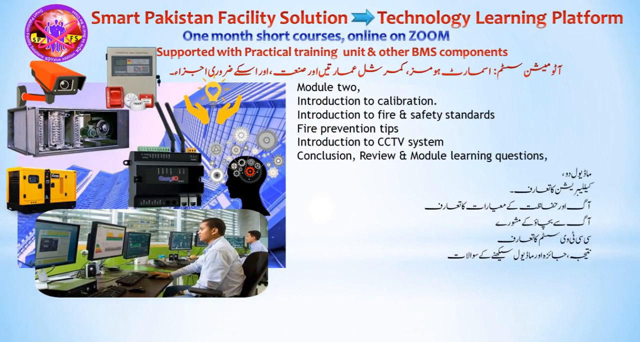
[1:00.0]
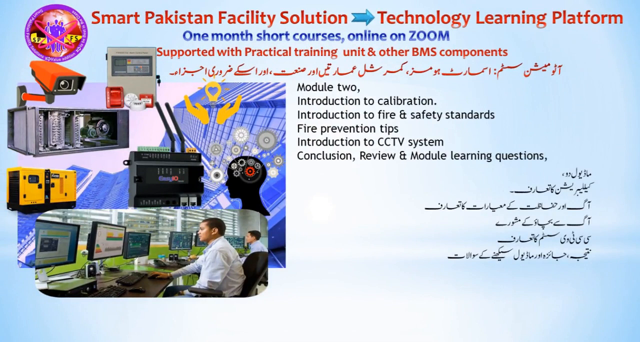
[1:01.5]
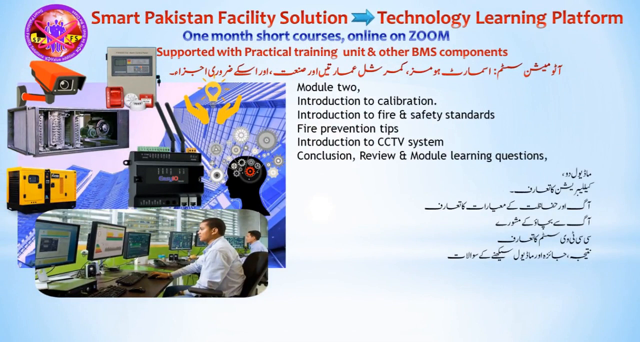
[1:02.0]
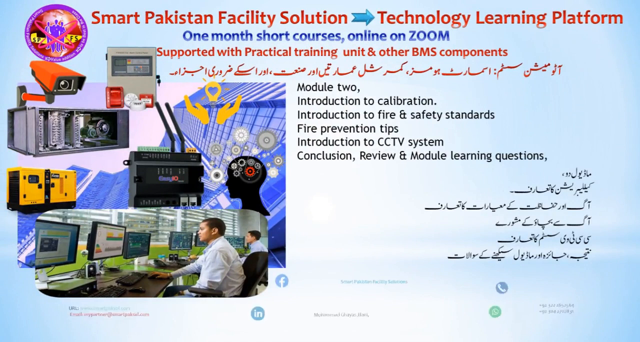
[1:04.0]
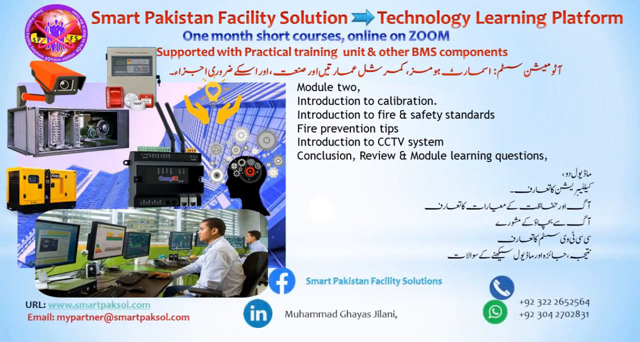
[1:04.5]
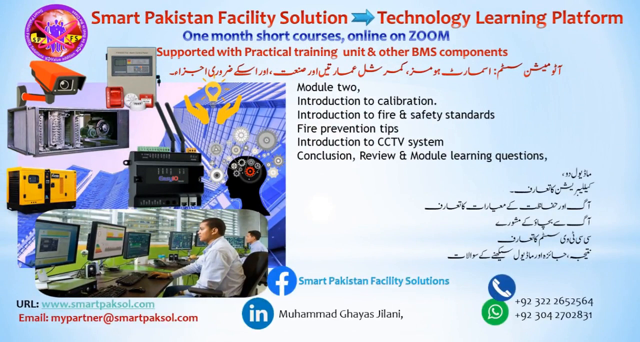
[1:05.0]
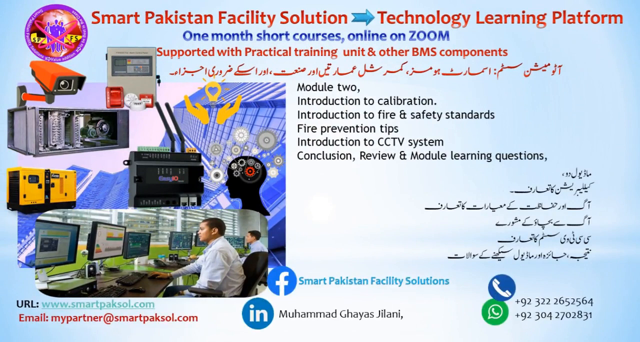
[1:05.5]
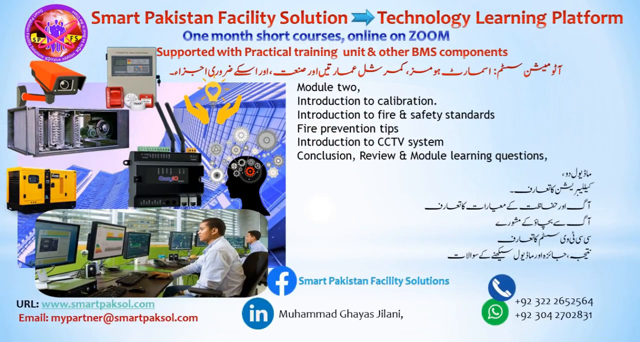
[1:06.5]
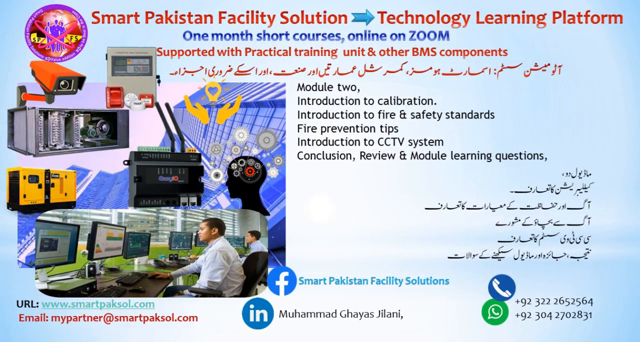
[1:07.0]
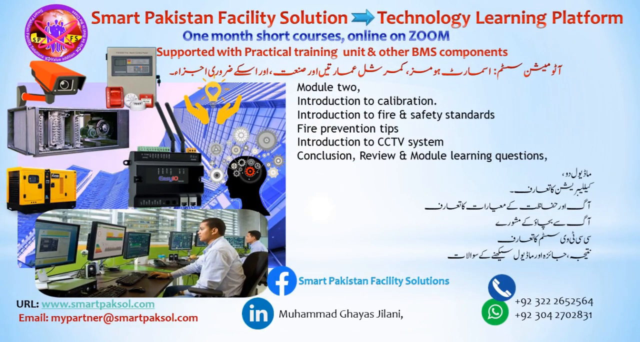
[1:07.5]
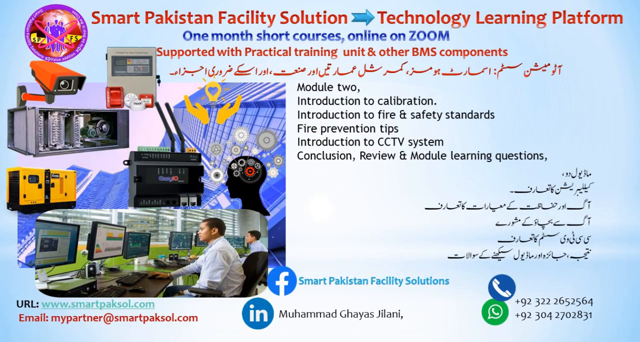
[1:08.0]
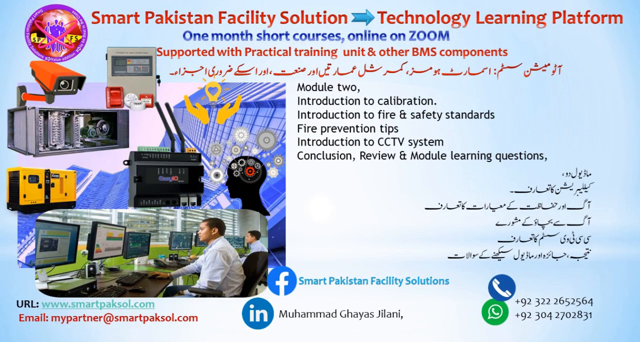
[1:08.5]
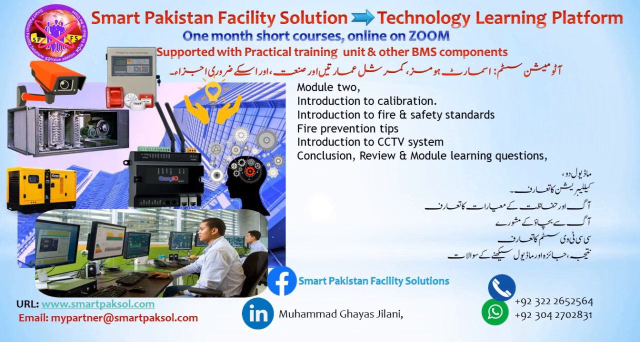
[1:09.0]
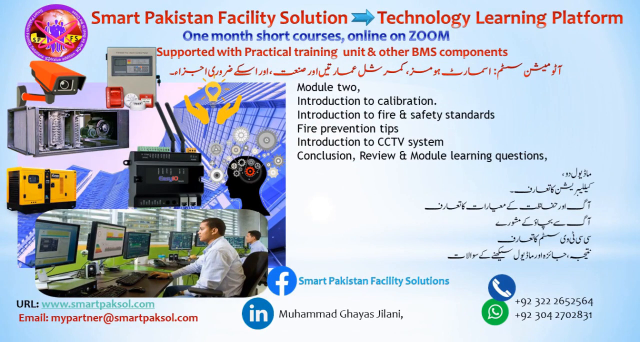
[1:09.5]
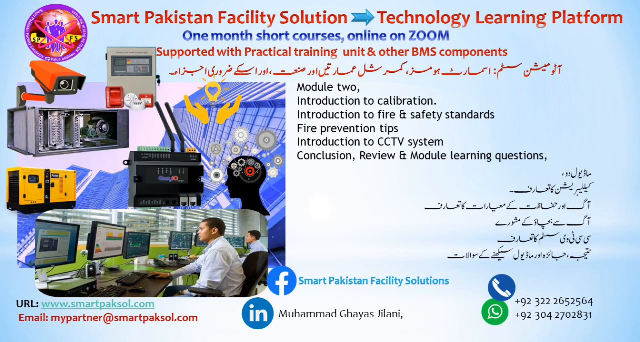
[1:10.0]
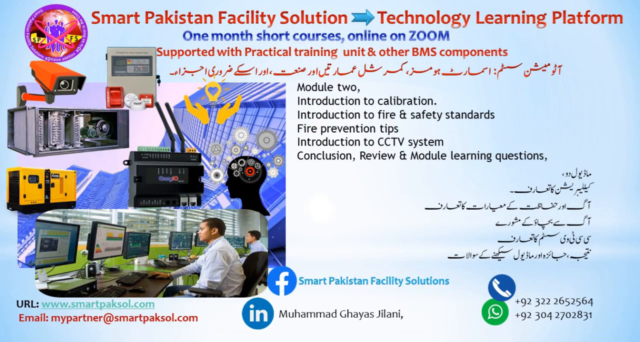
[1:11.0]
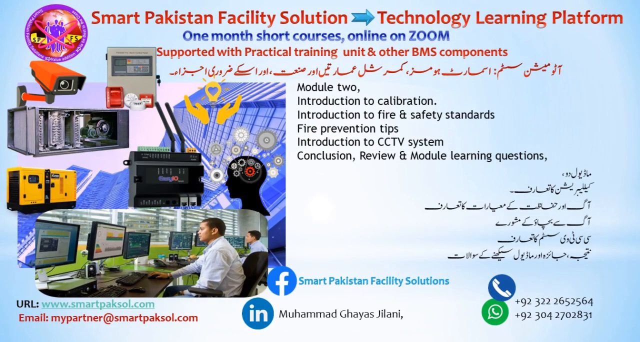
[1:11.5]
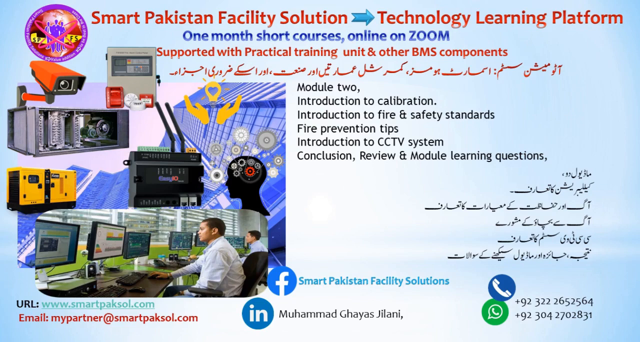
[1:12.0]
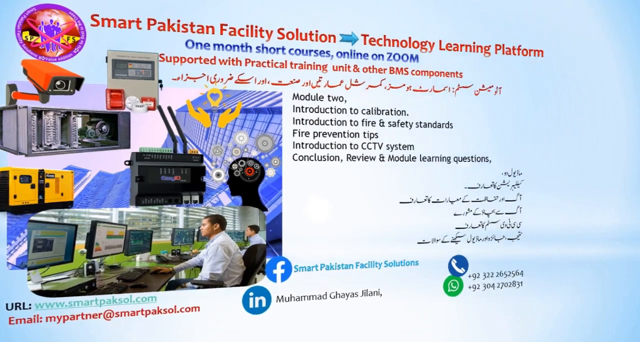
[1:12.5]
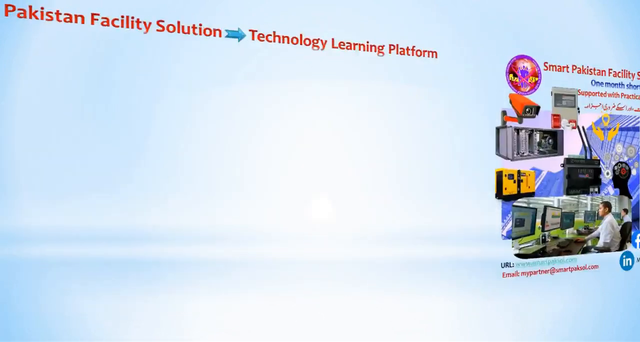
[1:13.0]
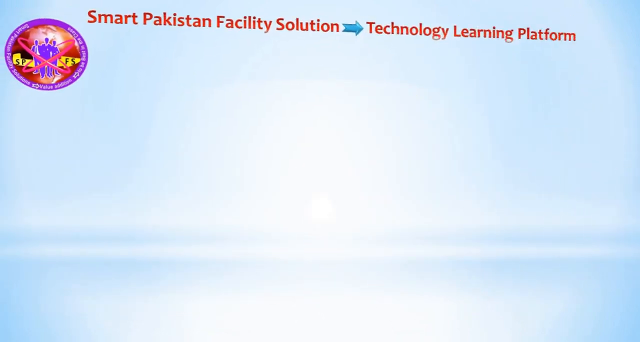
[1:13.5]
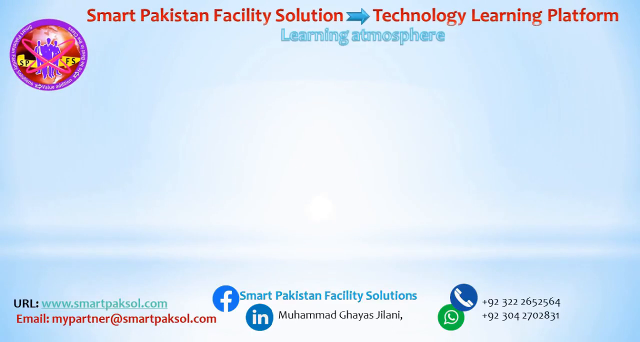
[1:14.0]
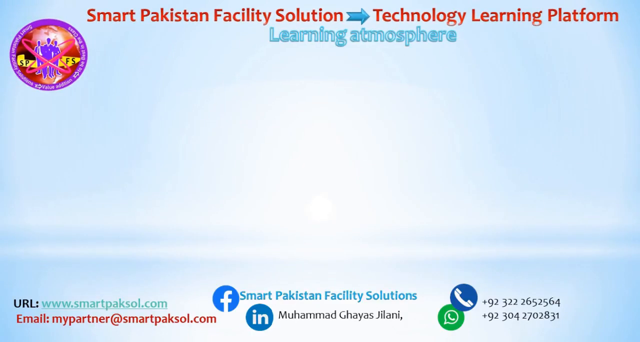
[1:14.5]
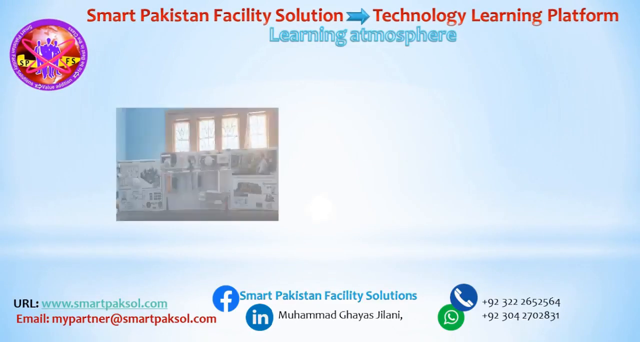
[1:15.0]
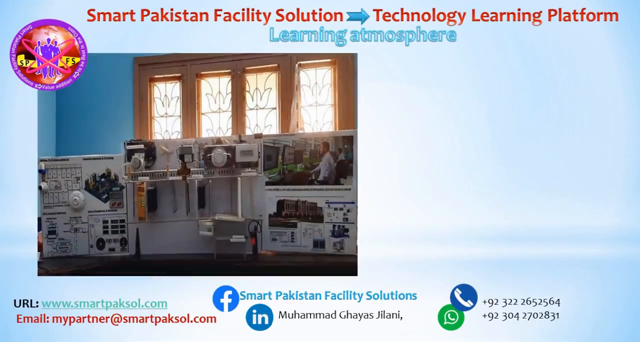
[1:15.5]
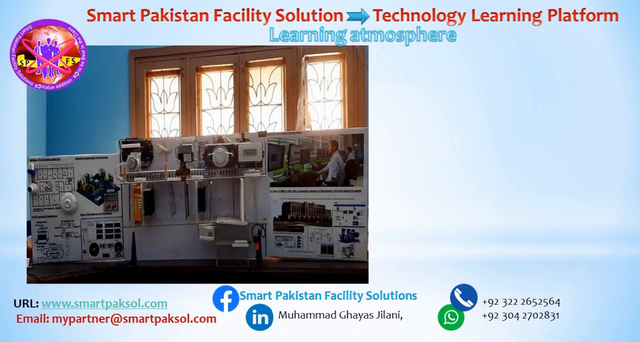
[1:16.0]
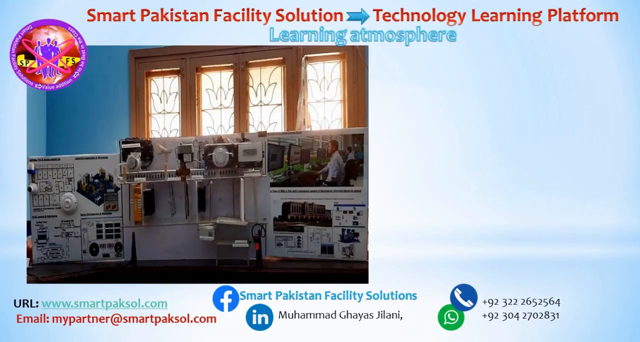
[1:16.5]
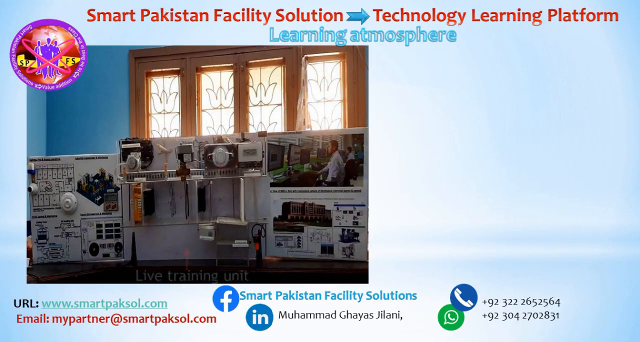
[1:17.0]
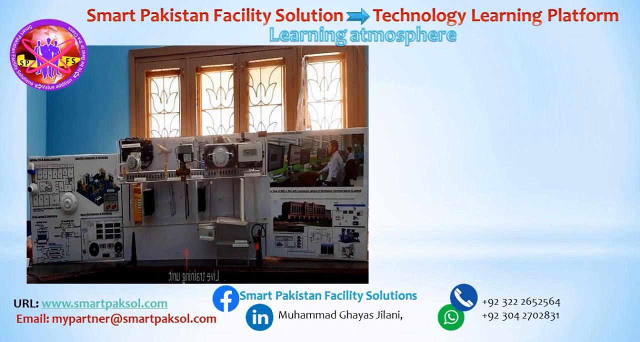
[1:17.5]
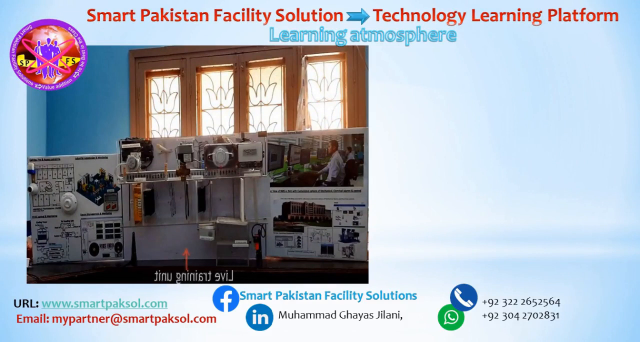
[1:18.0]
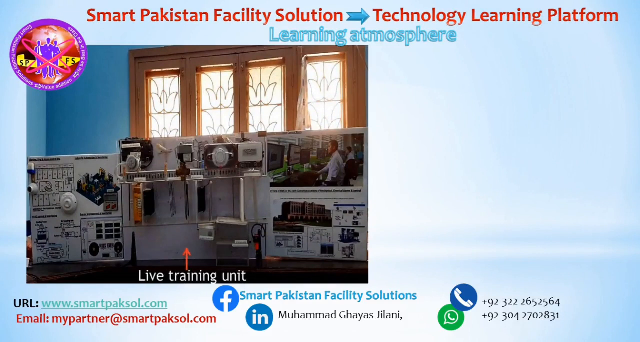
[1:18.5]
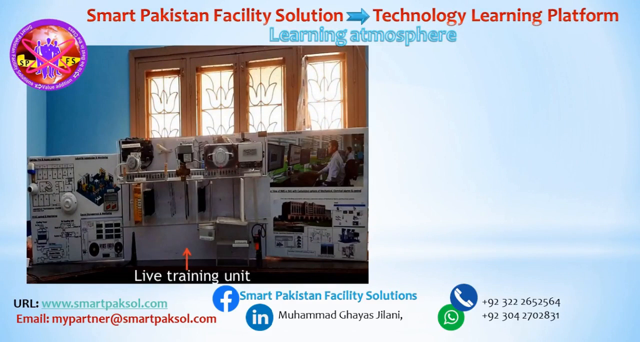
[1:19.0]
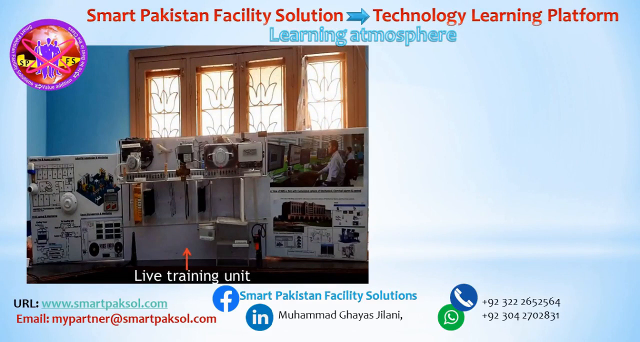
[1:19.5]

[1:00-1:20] A new slide appears with different writing in Hindu. Black text reads "Module 2, introduction to calibration, introduction to fire and safety standards, fire prevention tips, introduction to CCTV system, and conclusion review and module learning questions". Unlike the other slide, this text is not separated into bullet points. The same image and logo as before are on the left side of the screen, and on the right the same Hindu writing in black apparently remains. An animation then shows the same information as the opening slide, with the company's contact information and logos for each social media site next to the information. The background is still the white and blue background that looks like a sky.